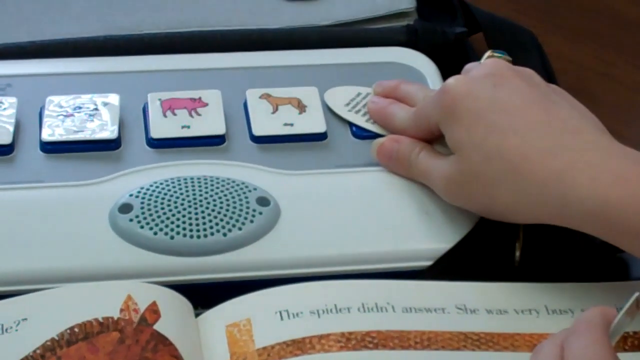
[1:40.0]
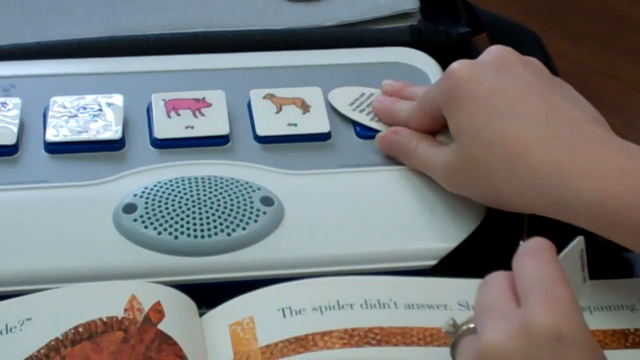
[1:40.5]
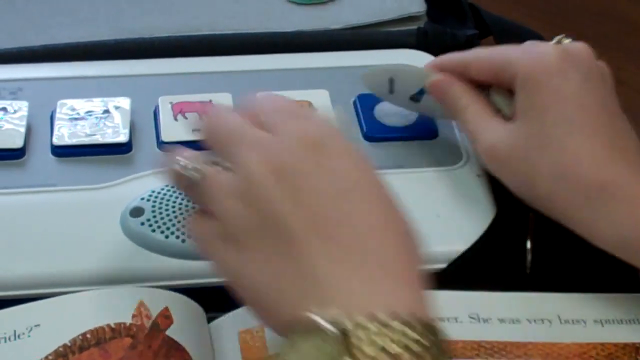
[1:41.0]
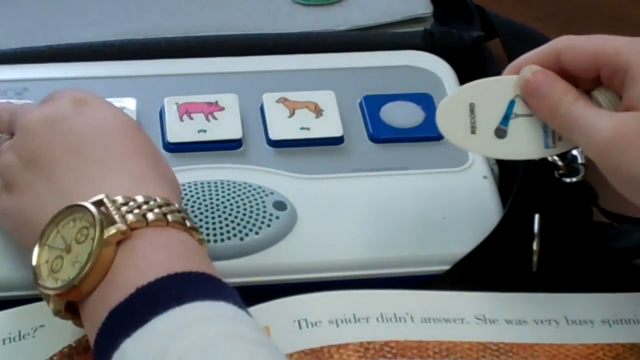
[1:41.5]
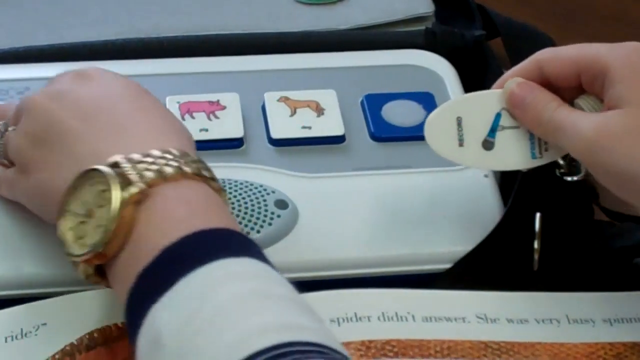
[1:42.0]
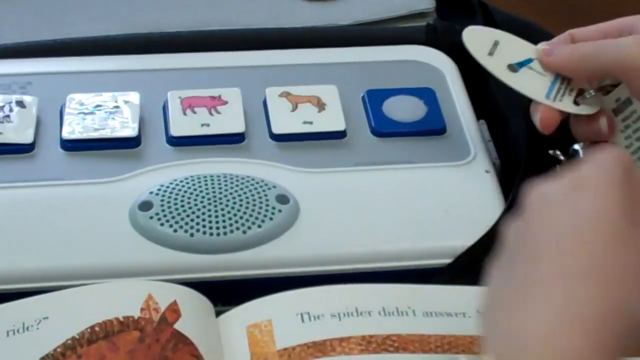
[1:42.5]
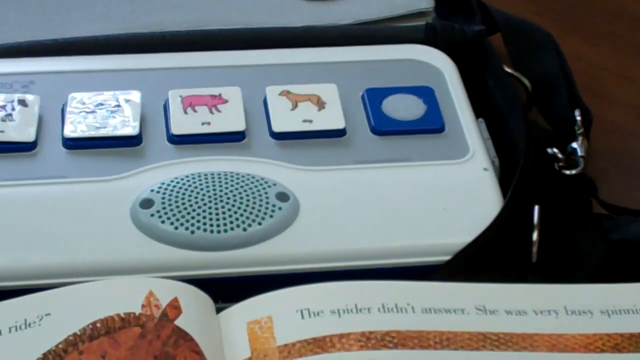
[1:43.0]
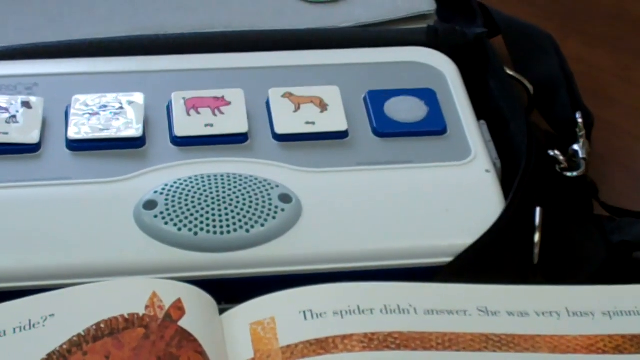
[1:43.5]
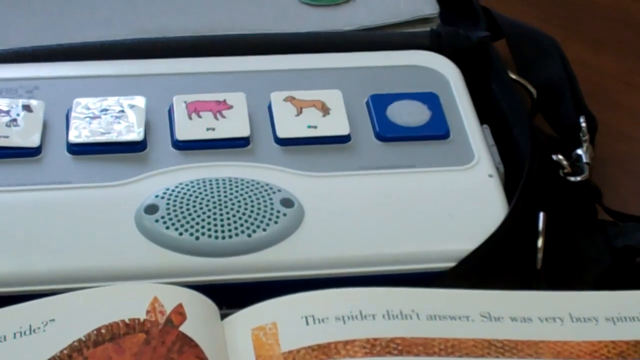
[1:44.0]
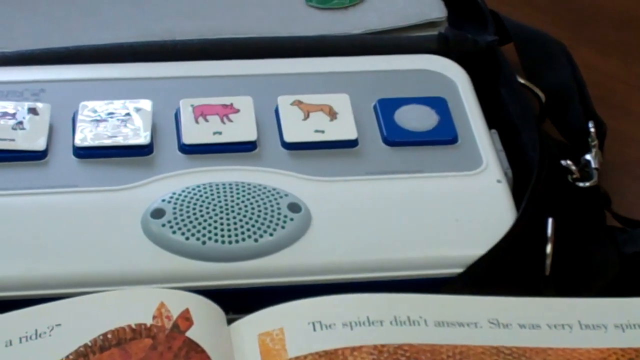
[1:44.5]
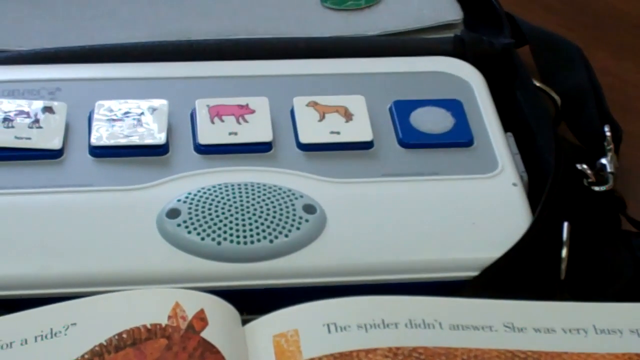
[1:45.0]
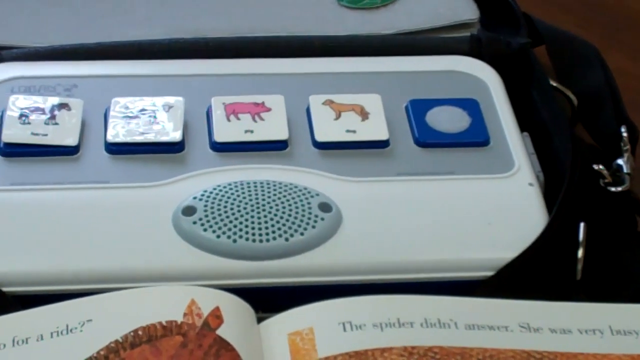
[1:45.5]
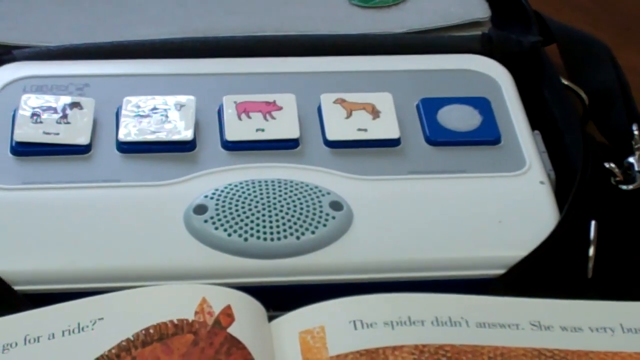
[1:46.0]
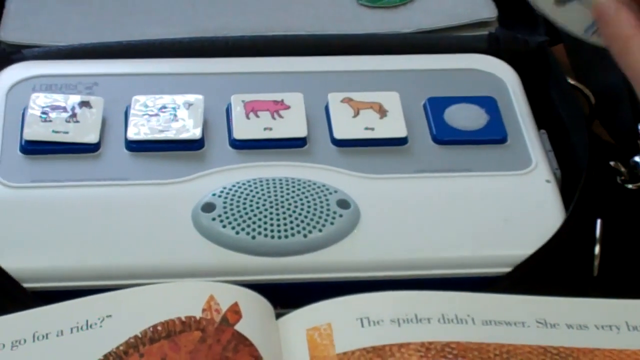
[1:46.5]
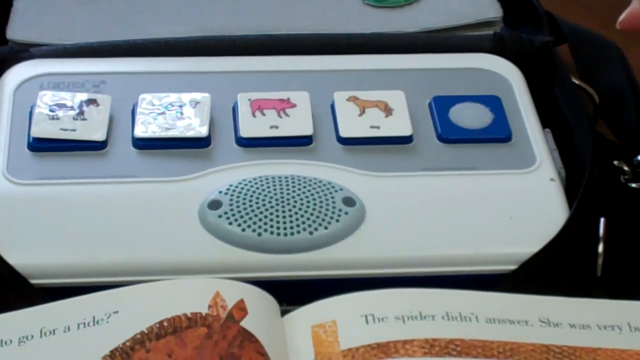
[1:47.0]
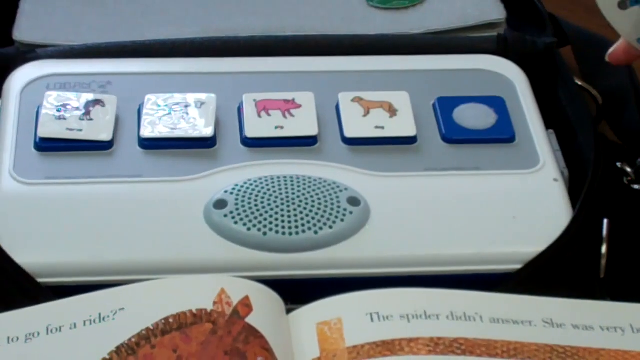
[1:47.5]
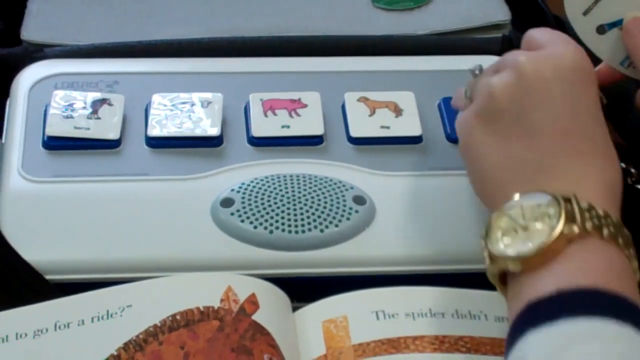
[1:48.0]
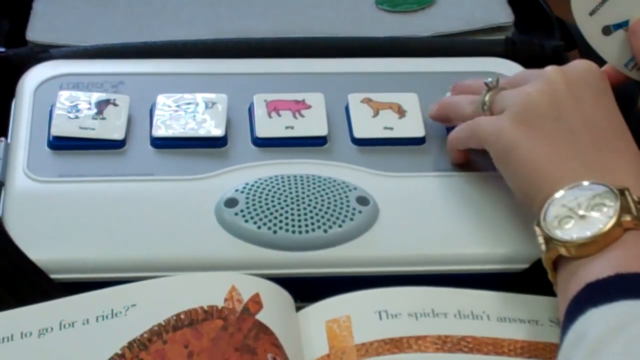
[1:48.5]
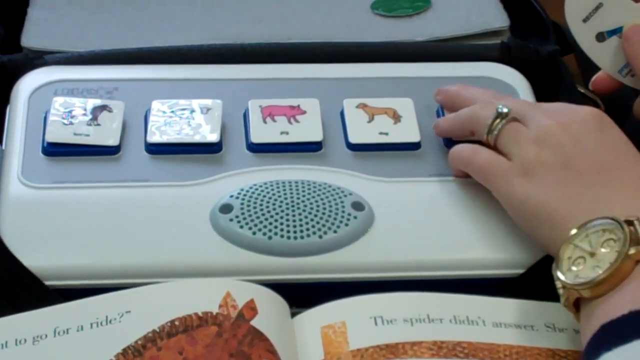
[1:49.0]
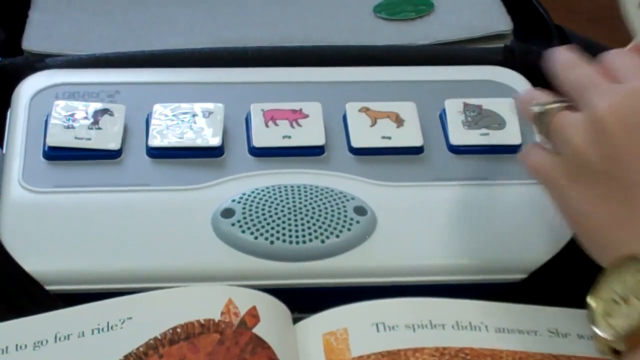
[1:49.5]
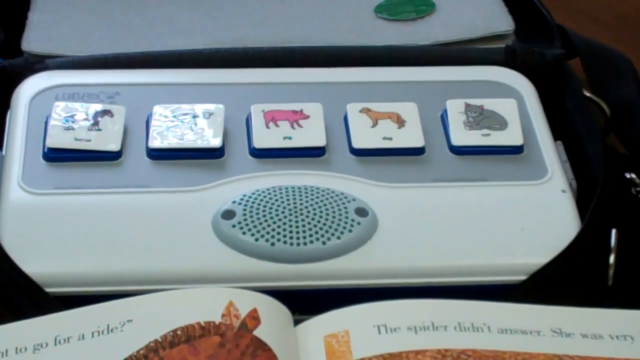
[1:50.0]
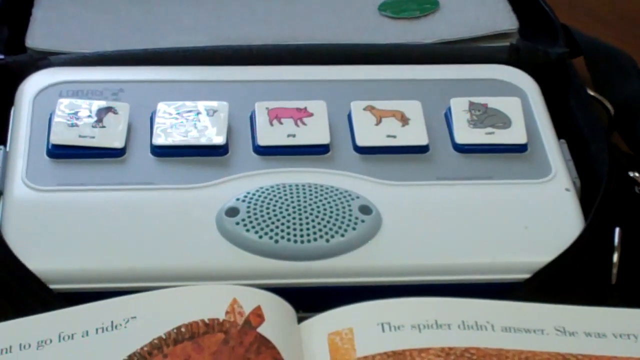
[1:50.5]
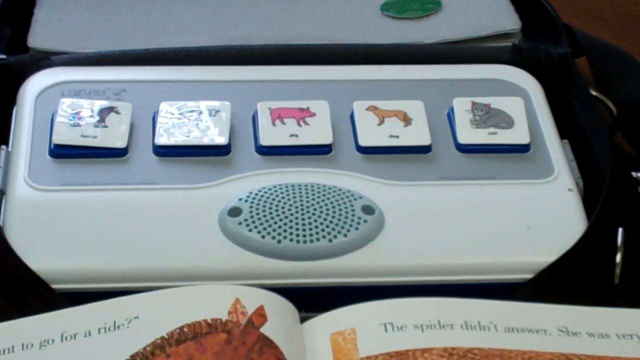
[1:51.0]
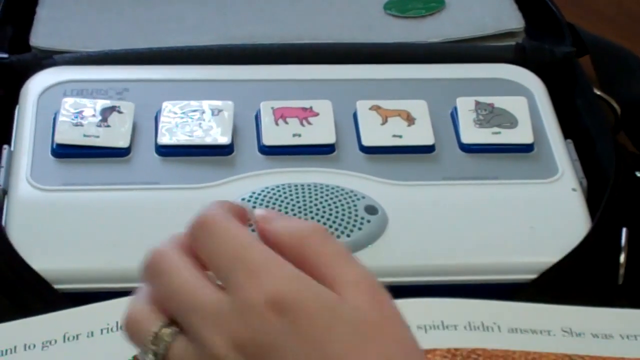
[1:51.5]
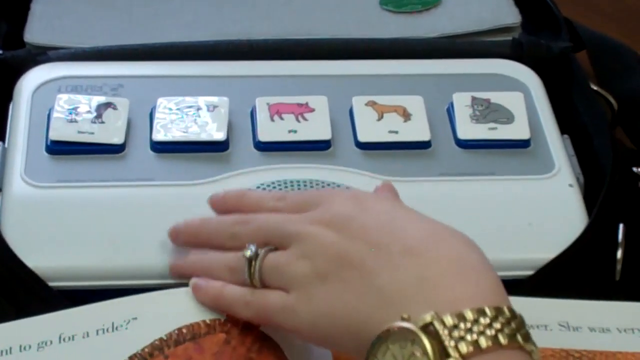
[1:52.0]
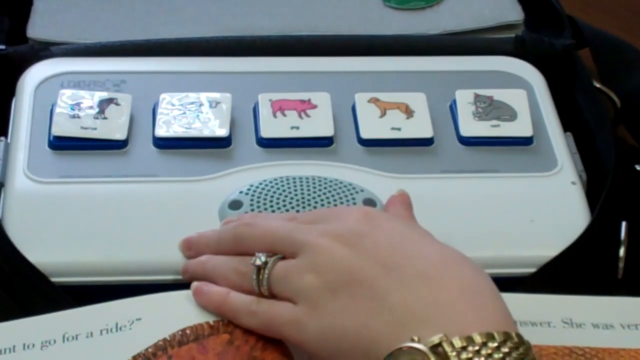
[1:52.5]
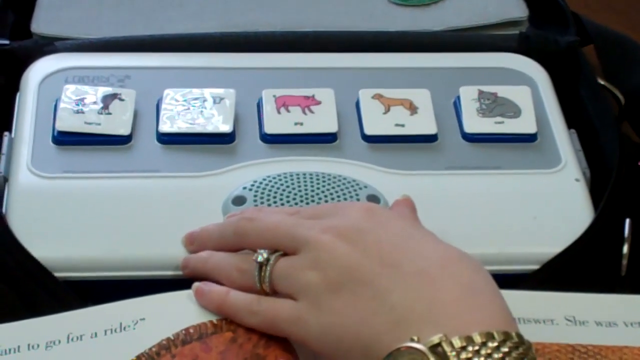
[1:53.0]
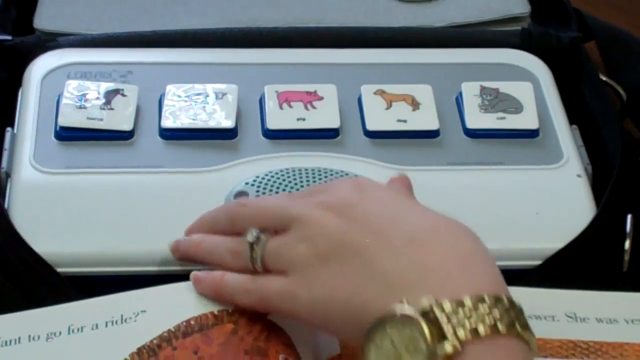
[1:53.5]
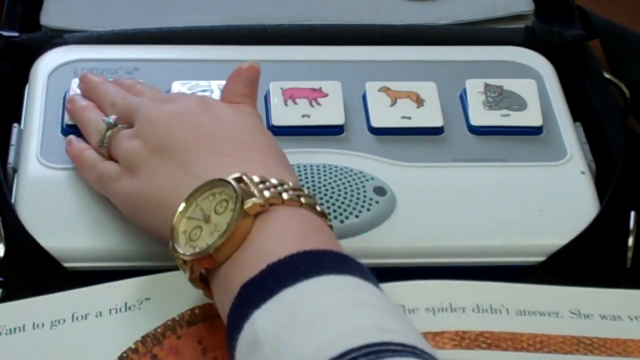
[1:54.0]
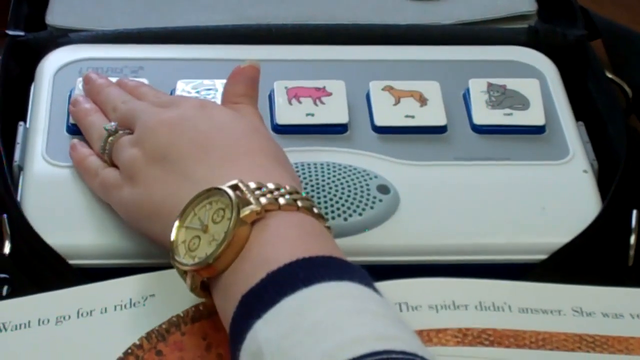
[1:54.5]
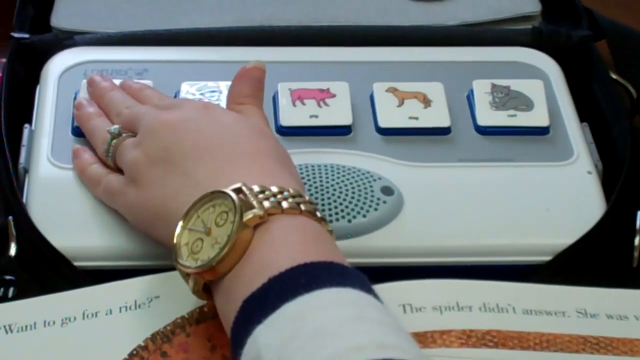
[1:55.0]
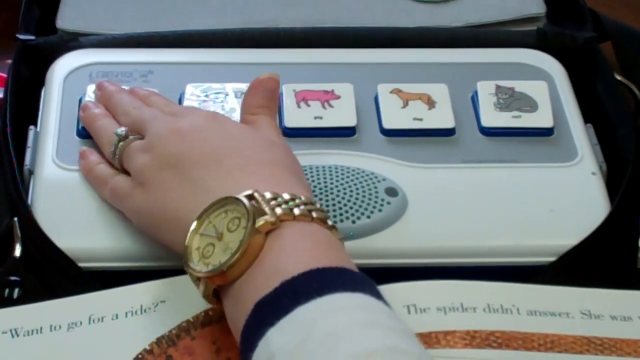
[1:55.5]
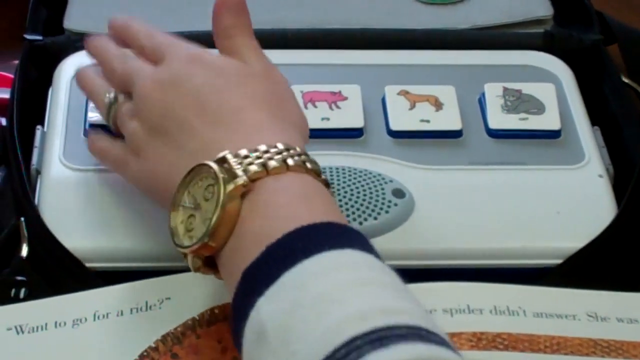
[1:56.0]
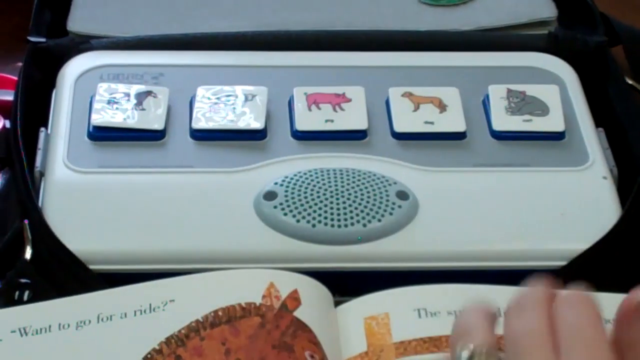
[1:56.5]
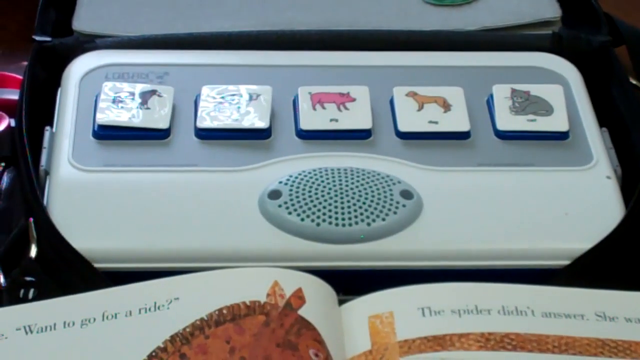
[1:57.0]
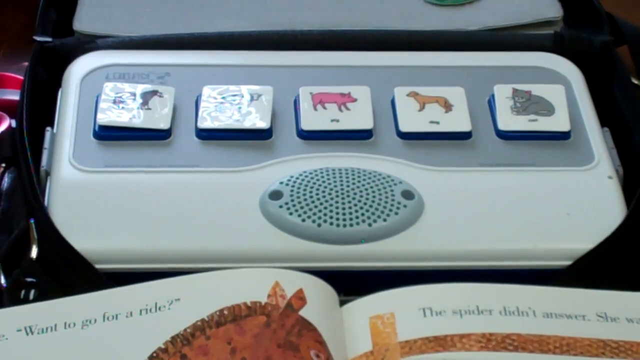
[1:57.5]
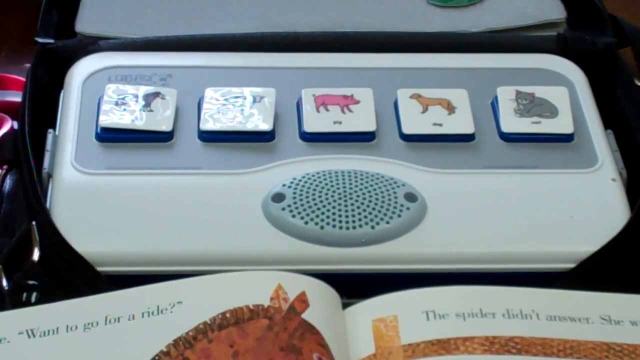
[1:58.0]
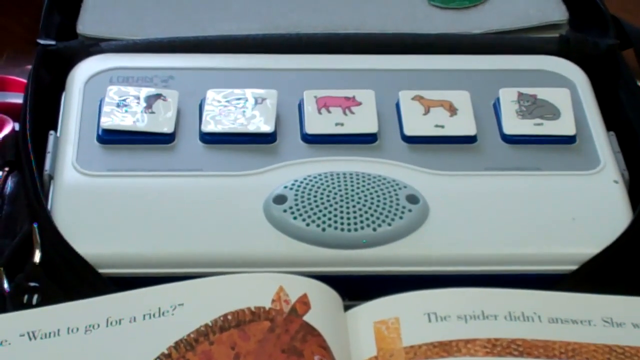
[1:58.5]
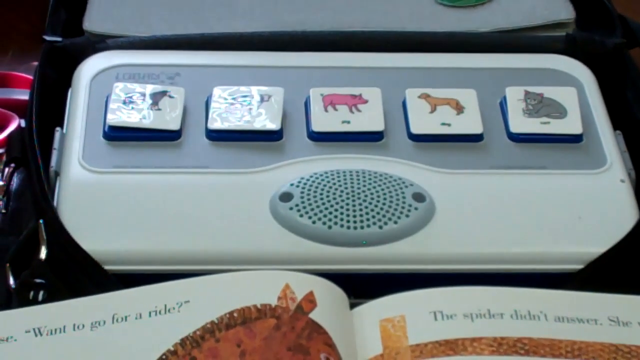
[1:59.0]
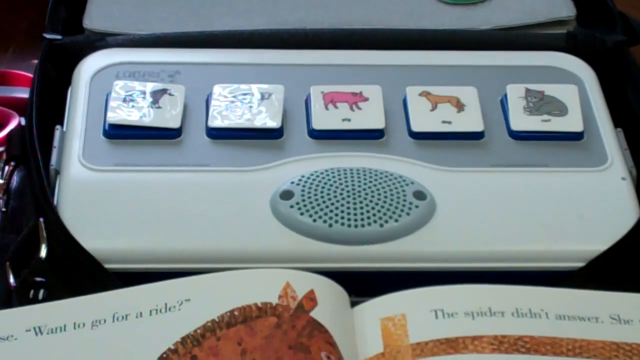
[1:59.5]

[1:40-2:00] A close-up shows the console, which has five white buttons horizontally across the top with pictures of animals; a pig and a dog are visible. Over the console button on the far right of the screen, a woman's right hand, wearing a ring, presses a key card. Her left hand comes into view and presses another button; on it she wears a wedding ring, an engagement ring and a heavy gold watch with an ornate gold band. She presses the button on the far left, removes her hands from the console, and waves the key card around again. She replaces the image on the far-right button with a cat, touches the speaker in the console, and presses down the button with the horse on it.